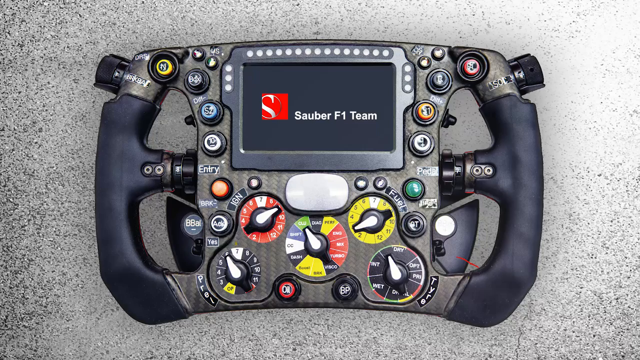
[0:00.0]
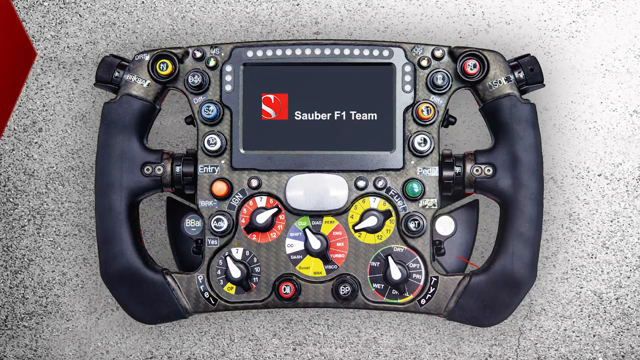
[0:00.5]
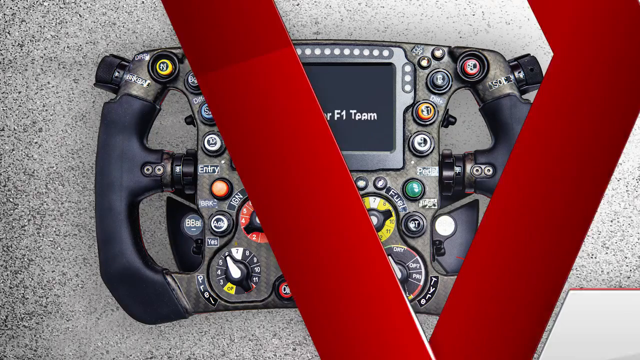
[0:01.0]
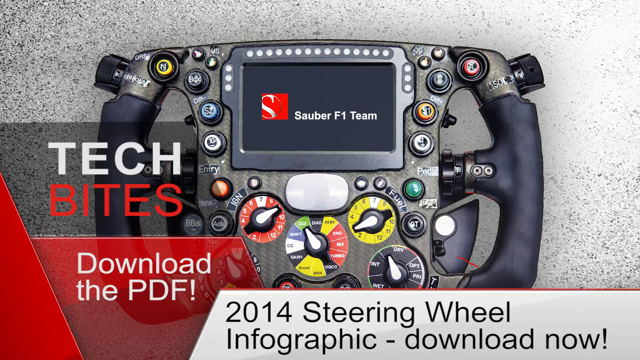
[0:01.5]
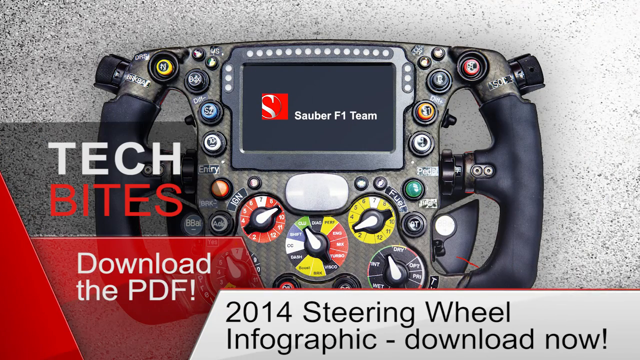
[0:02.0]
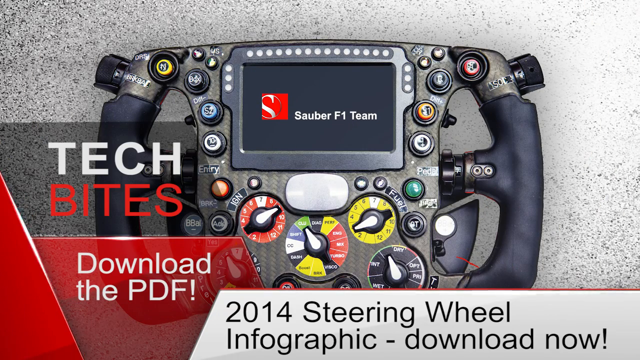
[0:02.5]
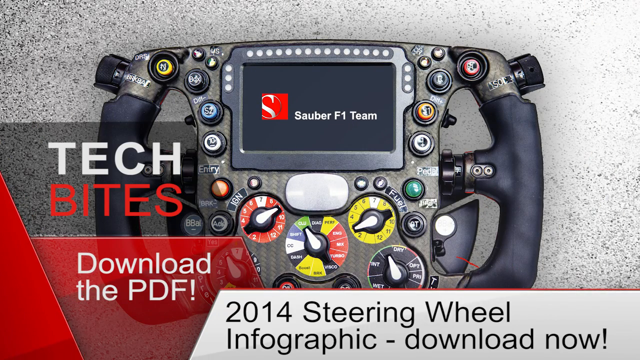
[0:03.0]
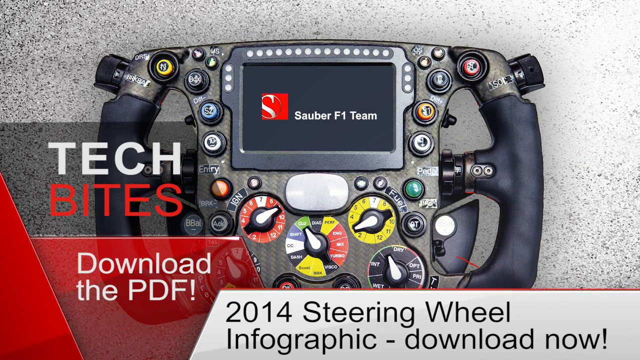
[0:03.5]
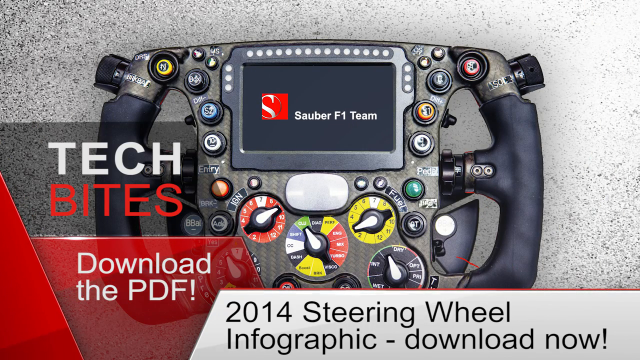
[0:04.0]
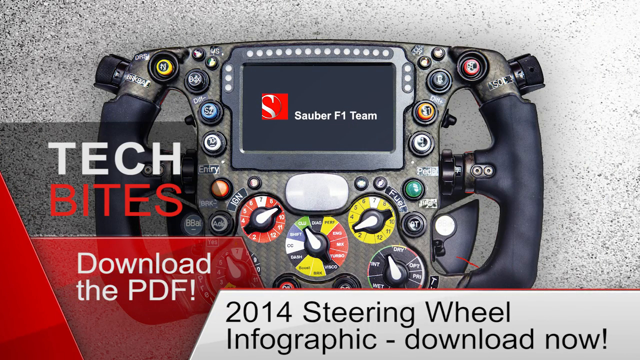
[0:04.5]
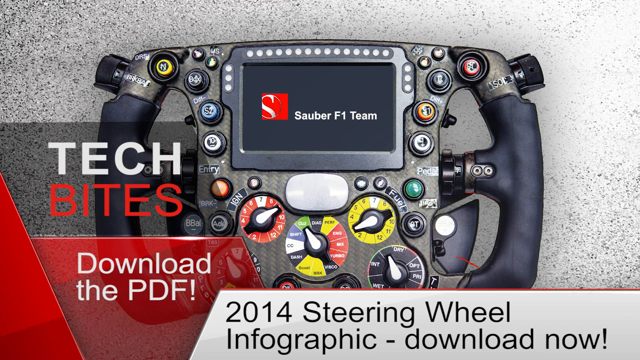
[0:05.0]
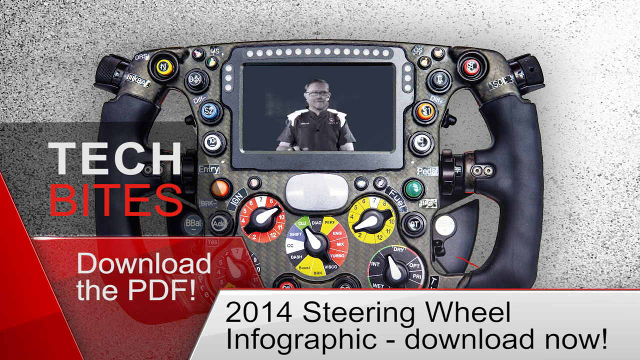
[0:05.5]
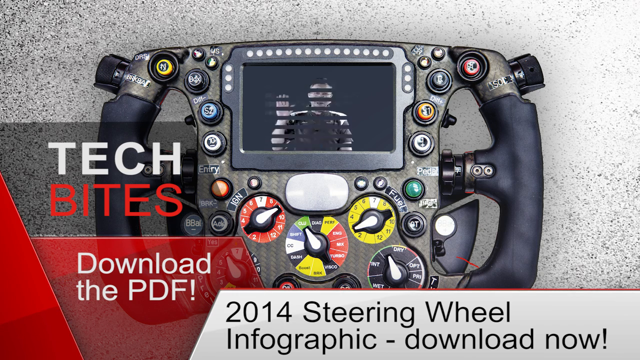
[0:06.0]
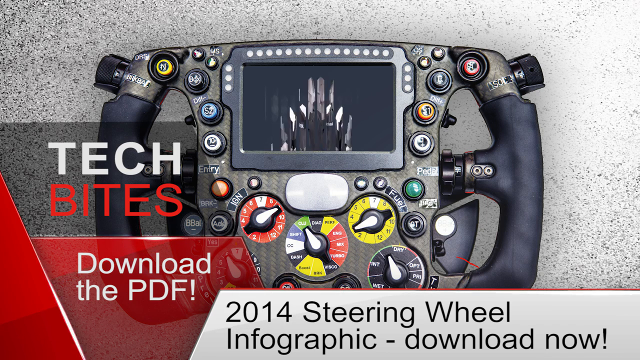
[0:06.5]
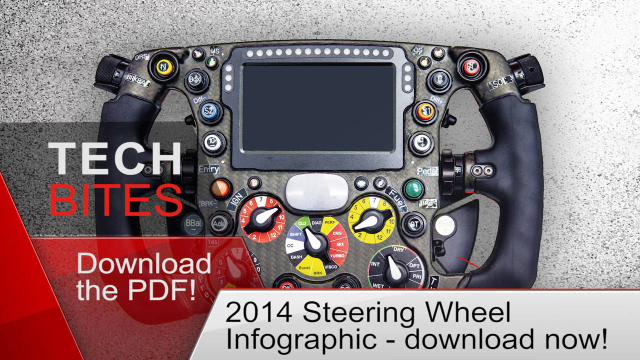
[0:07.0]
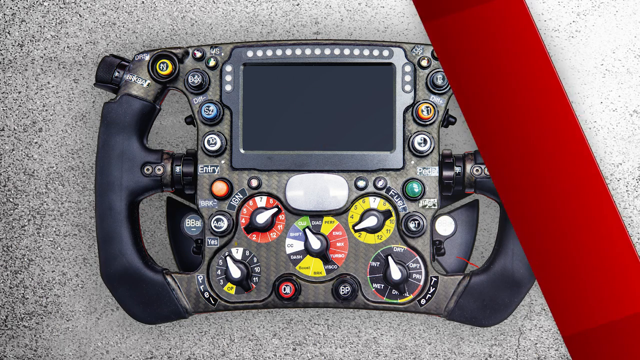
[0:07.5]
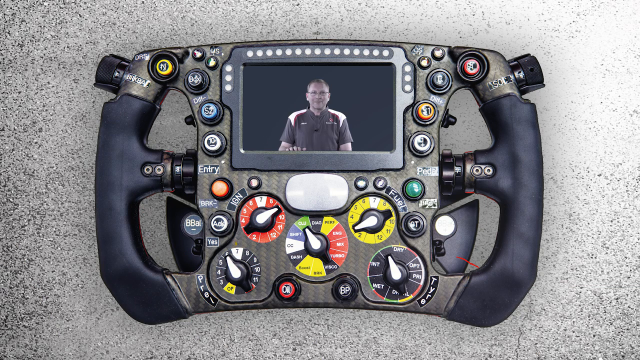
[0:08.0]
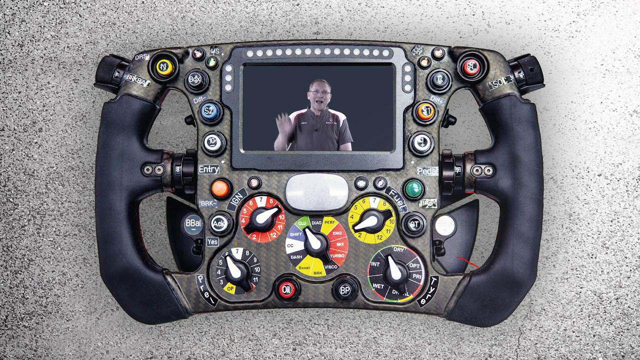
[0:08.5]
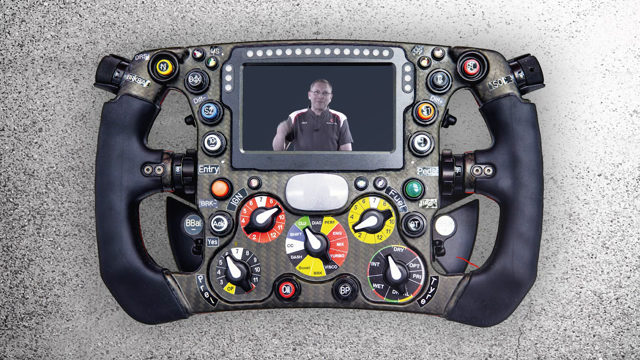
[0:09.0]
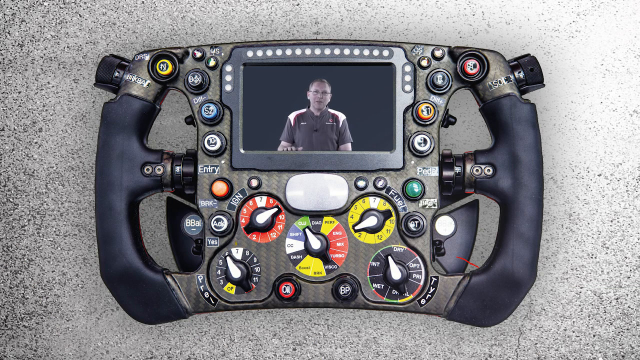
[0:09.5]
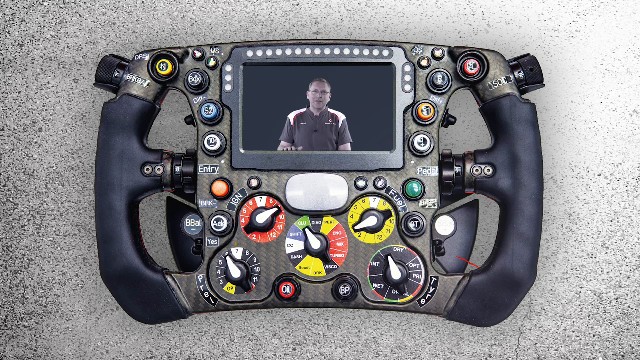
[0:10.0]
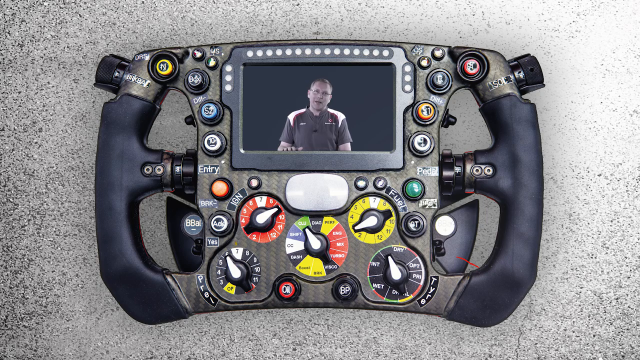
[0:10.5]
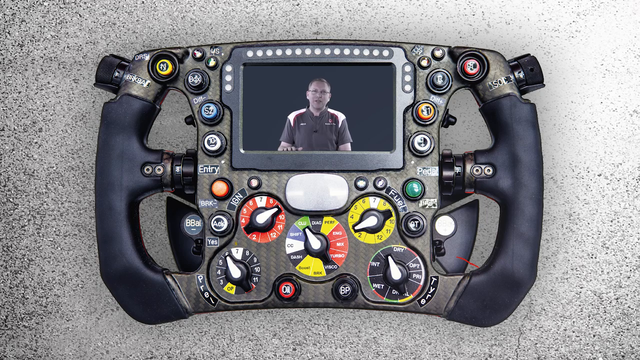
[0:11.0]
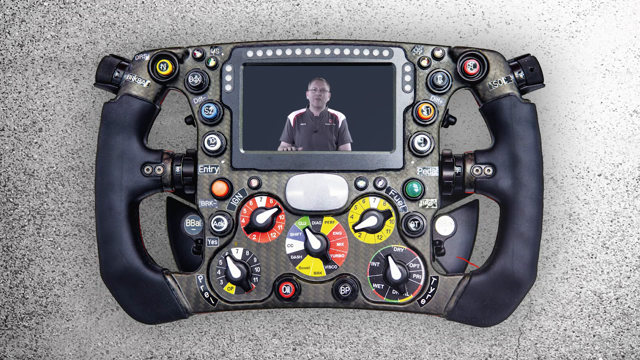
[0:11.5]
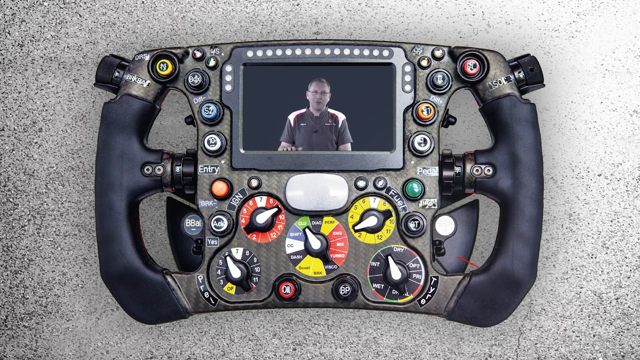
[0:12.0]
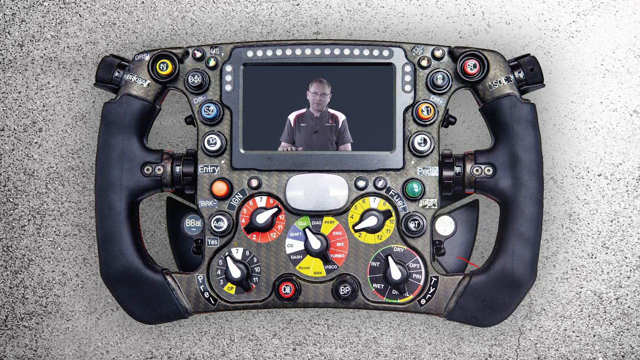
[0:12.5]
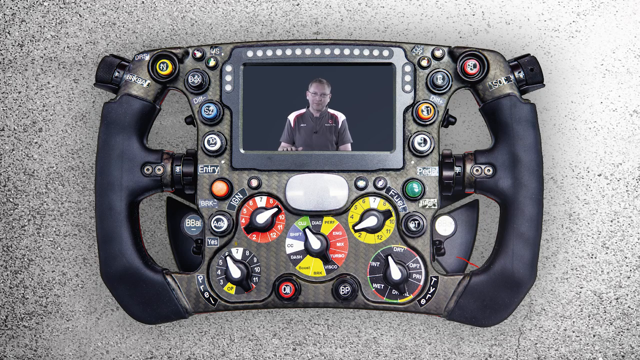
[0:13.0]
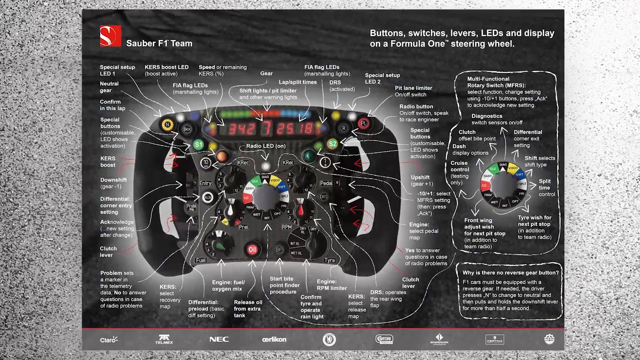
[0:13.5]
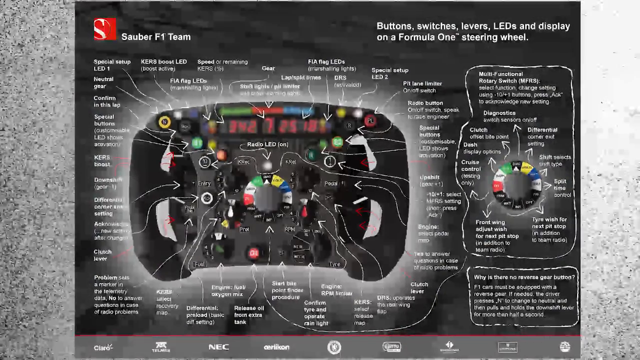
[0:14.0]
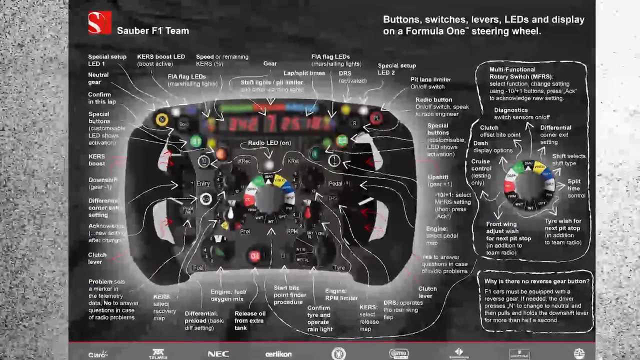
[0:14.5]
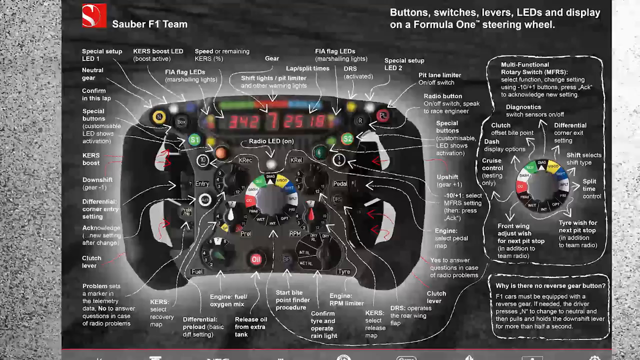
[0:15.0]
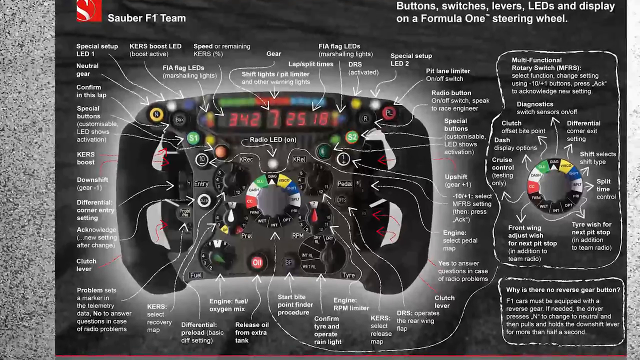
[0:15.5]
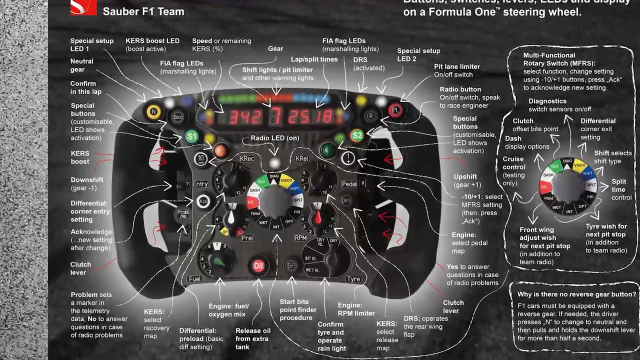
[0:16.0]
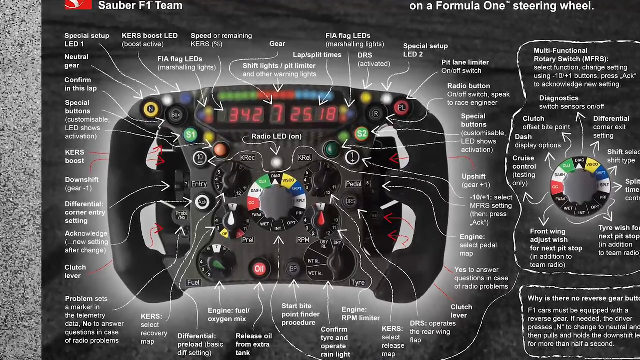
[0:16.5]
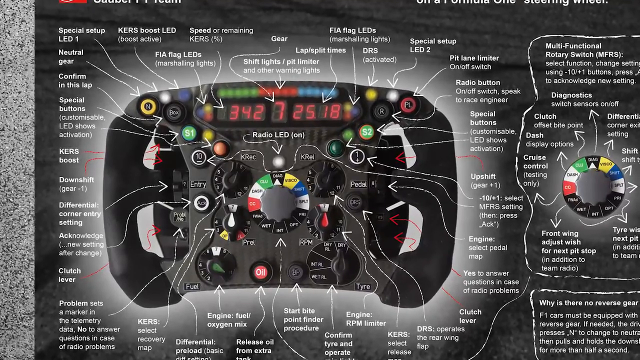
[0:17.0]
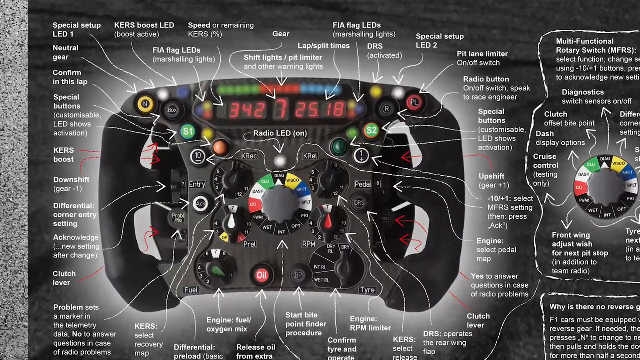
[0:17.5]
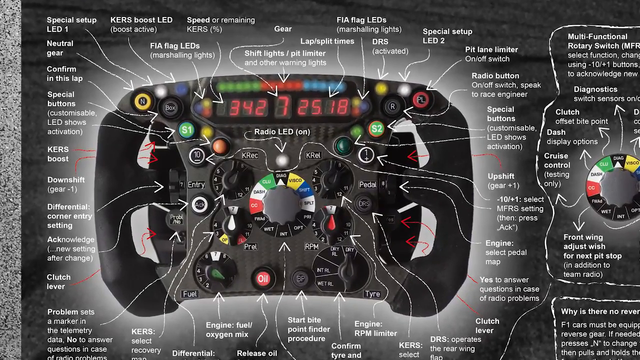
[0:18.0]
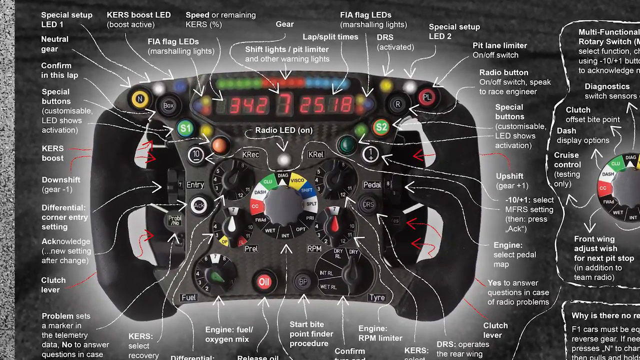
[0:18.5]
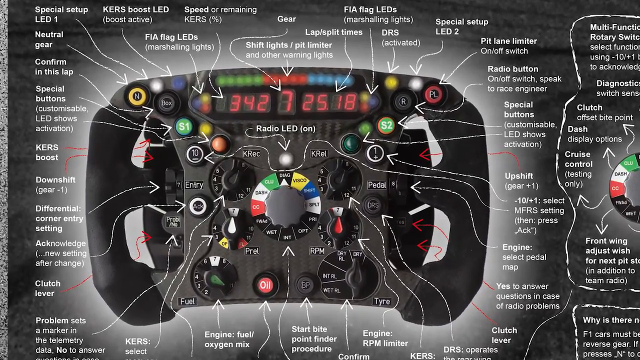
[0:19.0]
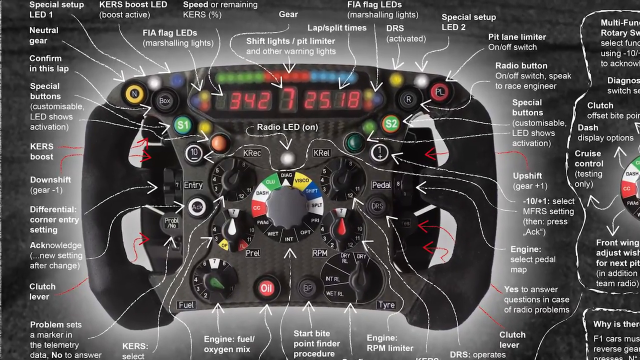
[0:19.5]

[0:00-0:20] The video opens on some kind of video game controller. Its small screen reads "Sauber f1 team" and shows a white S on a red block. The controller has handheld parts on the sides, a large number of small toggles and many buttons to press. It rests on what looks like a piece of concrete, or maybe gray carpet. Red squiggly lines sweep across, and the text "tech bites download the PDF 2014 steering wheel infographic download now" appears with small design elements around the words. A man in a black shirt, with white skin, then pops up on the steering wheel's screen, waves and begins to talk. Next comes a brochure for the game controller reading "special setup led one neutral gear confirm this lap": a lot of white text on a dark gray background showing instructions for using the toy.